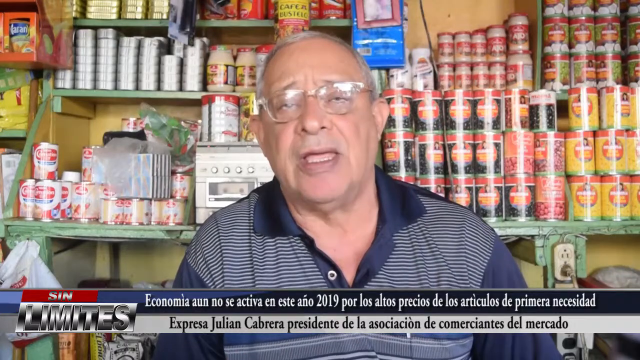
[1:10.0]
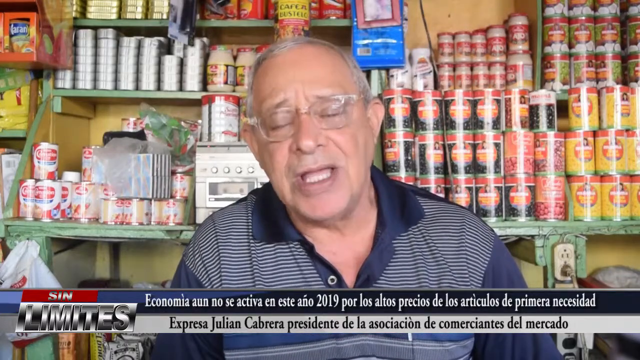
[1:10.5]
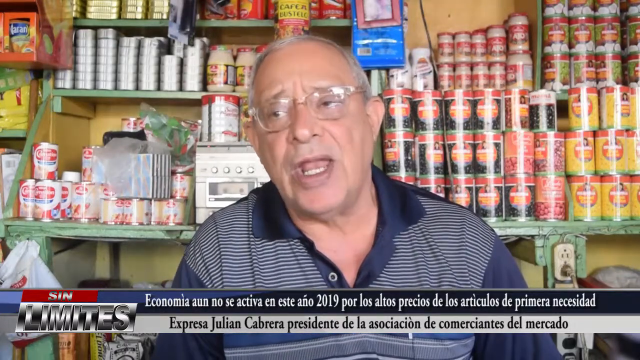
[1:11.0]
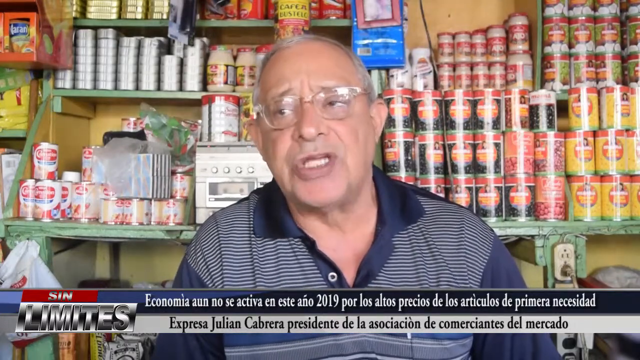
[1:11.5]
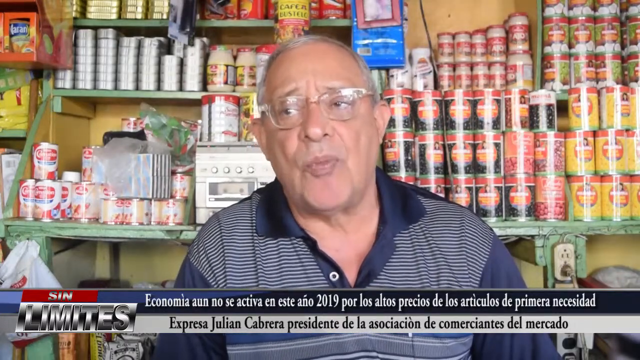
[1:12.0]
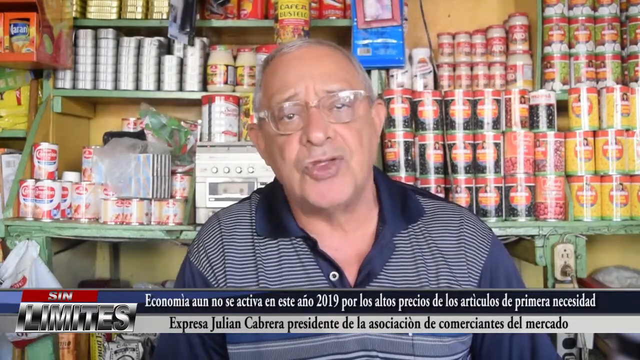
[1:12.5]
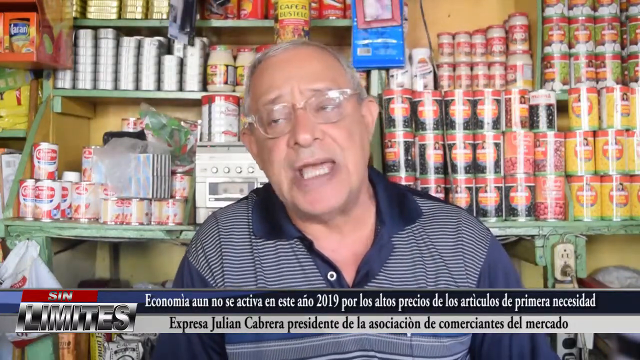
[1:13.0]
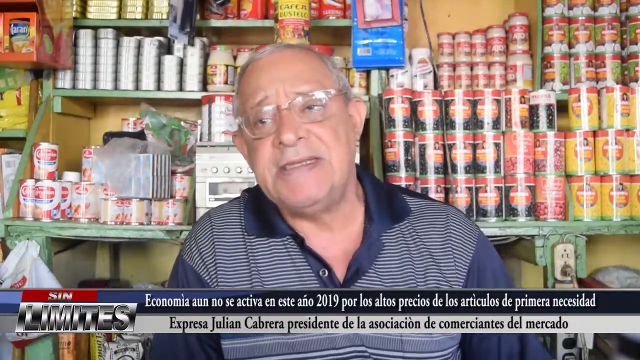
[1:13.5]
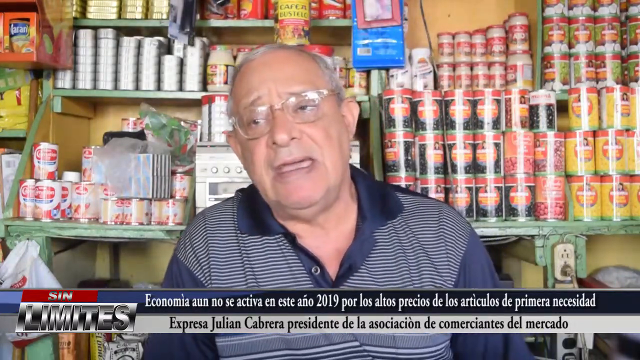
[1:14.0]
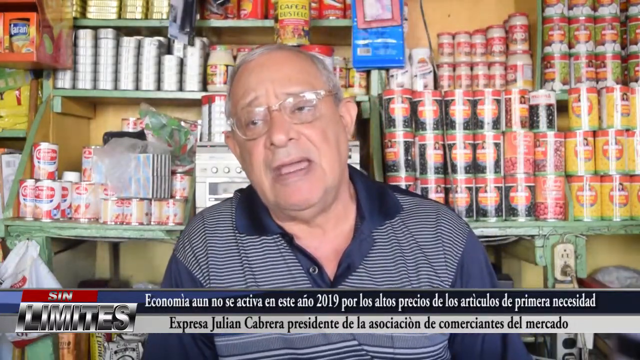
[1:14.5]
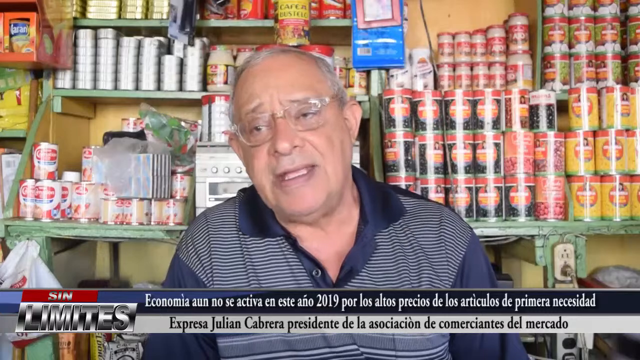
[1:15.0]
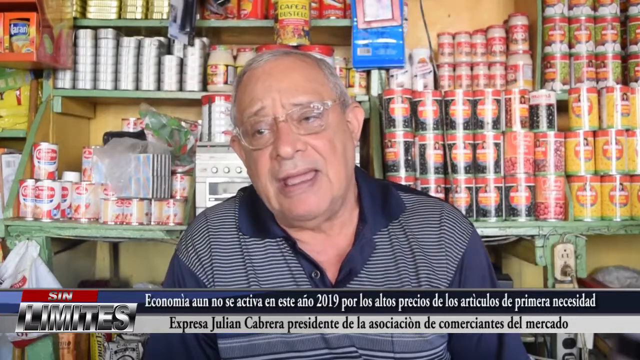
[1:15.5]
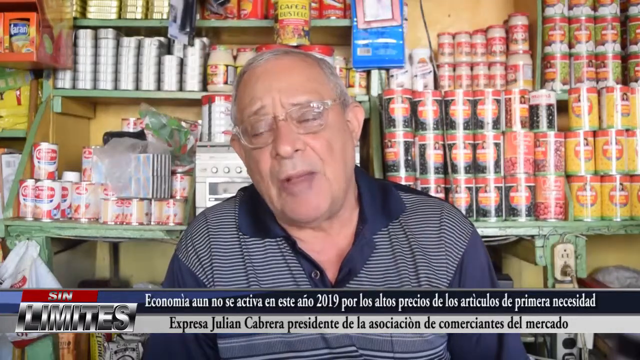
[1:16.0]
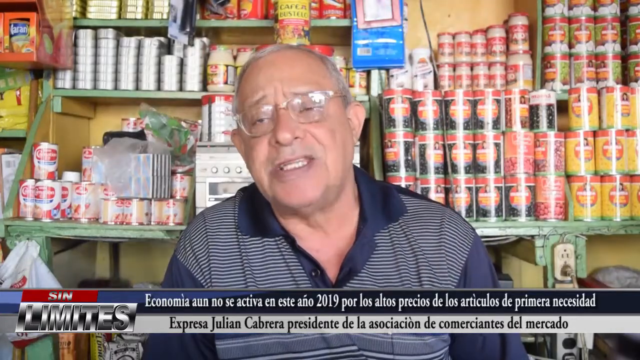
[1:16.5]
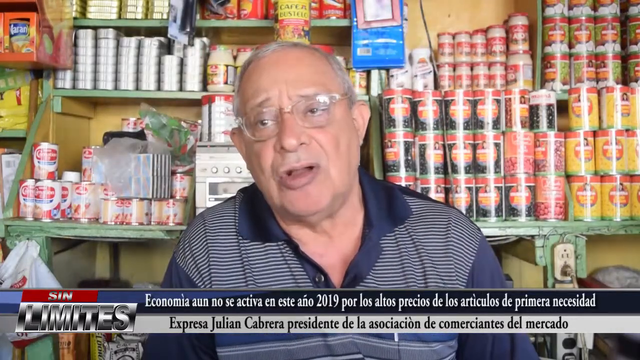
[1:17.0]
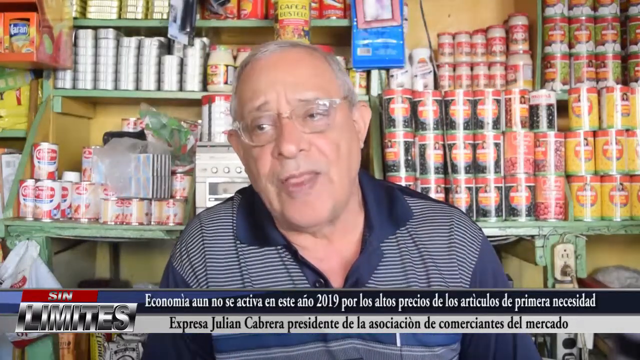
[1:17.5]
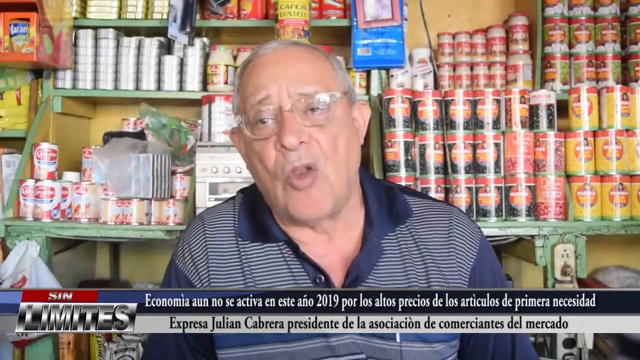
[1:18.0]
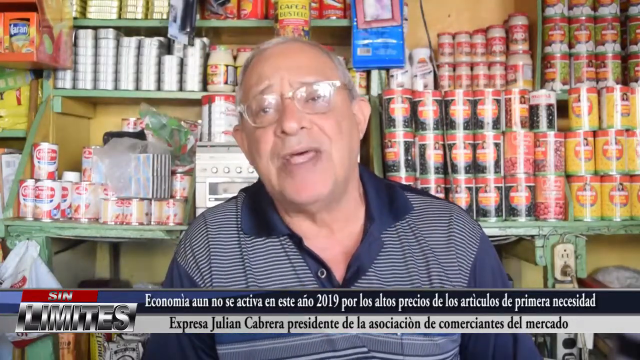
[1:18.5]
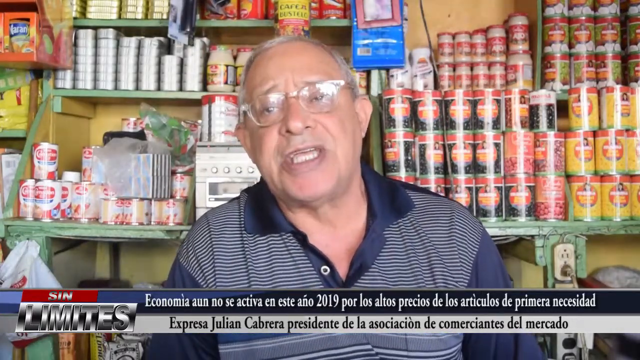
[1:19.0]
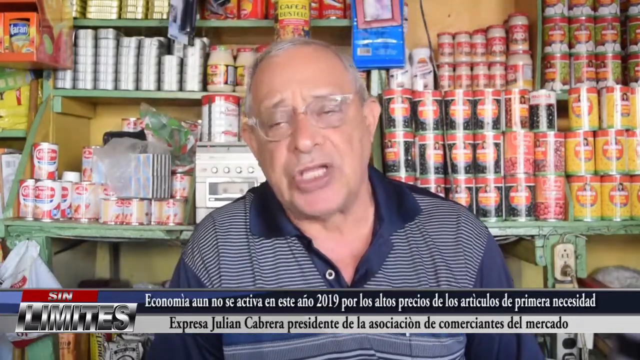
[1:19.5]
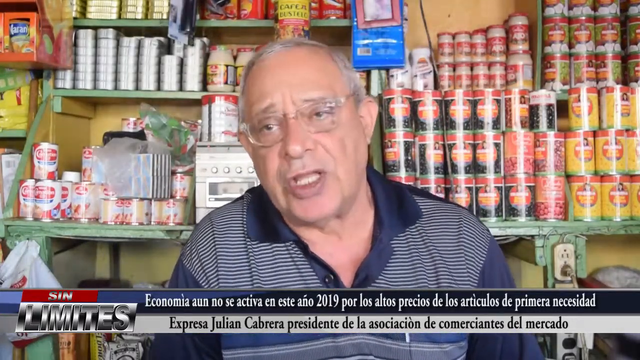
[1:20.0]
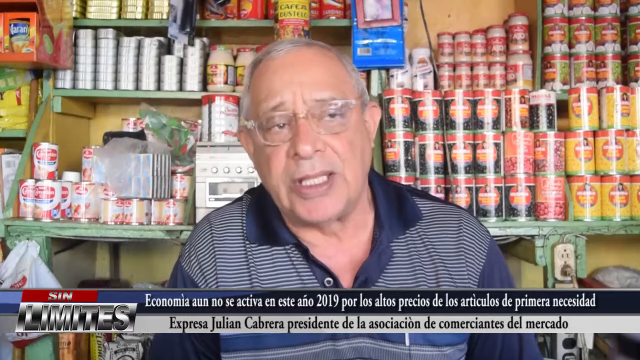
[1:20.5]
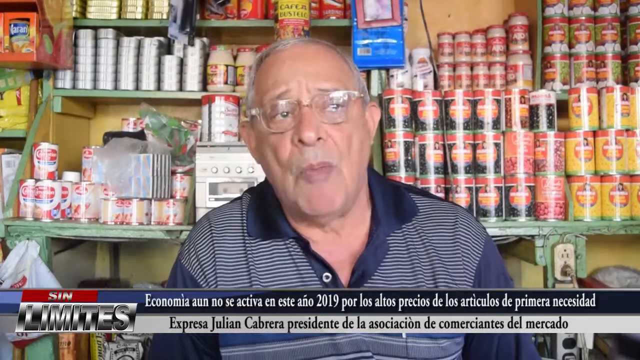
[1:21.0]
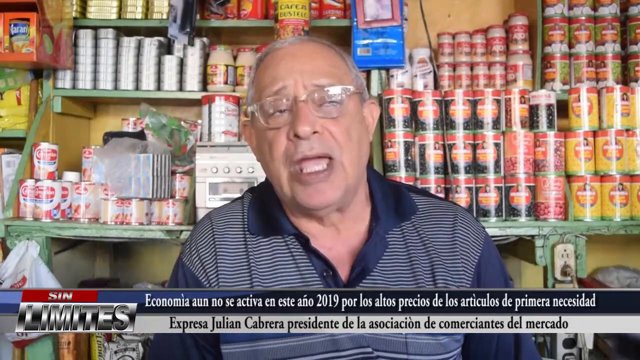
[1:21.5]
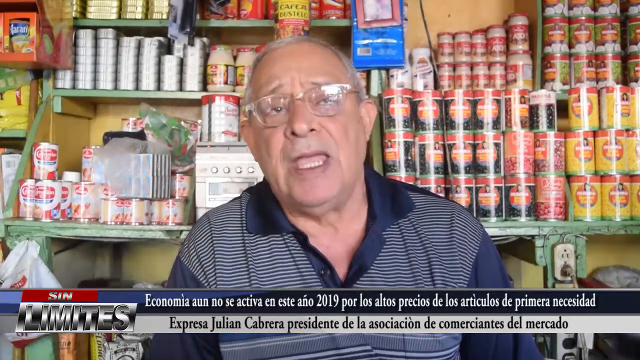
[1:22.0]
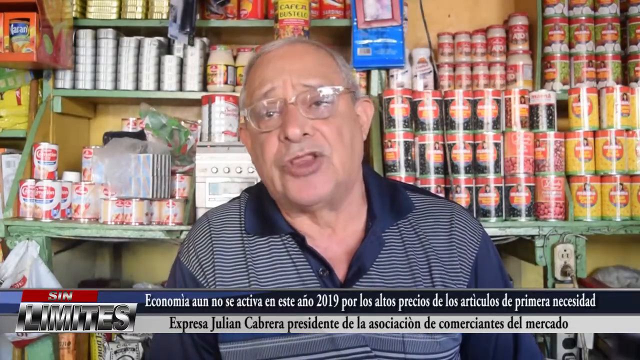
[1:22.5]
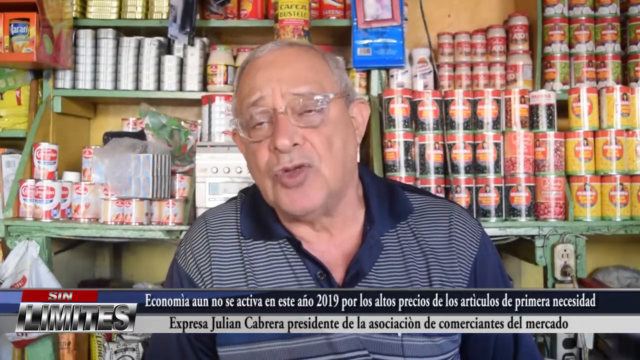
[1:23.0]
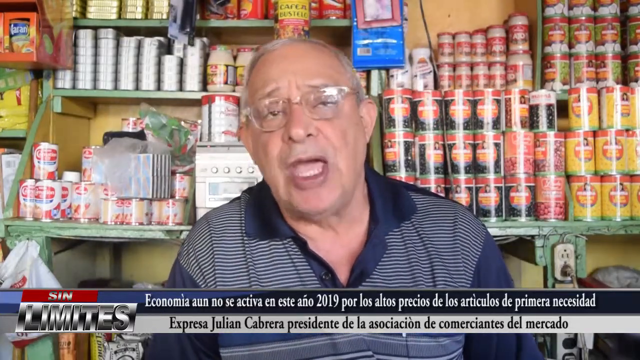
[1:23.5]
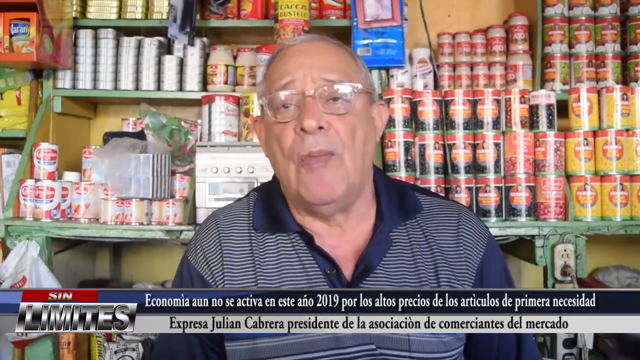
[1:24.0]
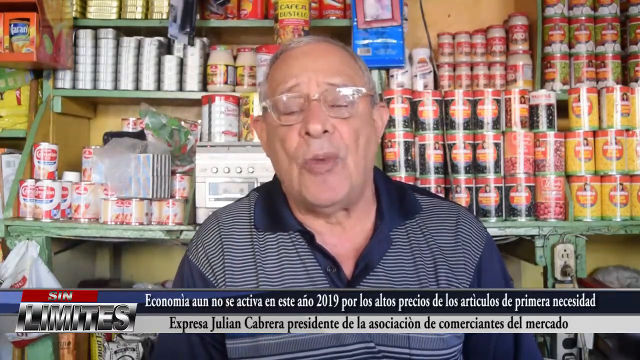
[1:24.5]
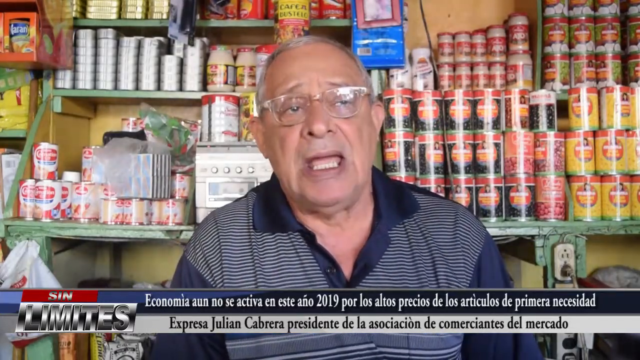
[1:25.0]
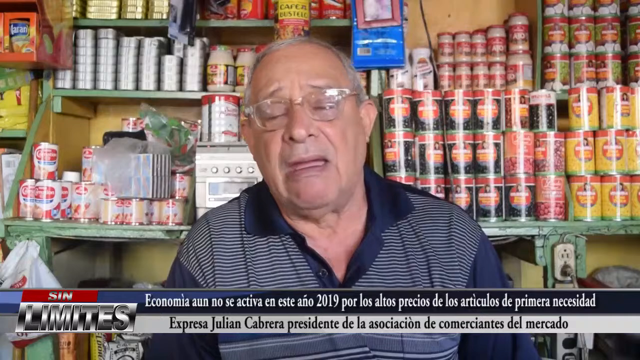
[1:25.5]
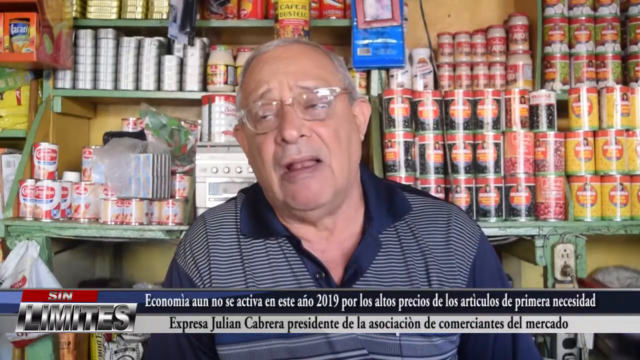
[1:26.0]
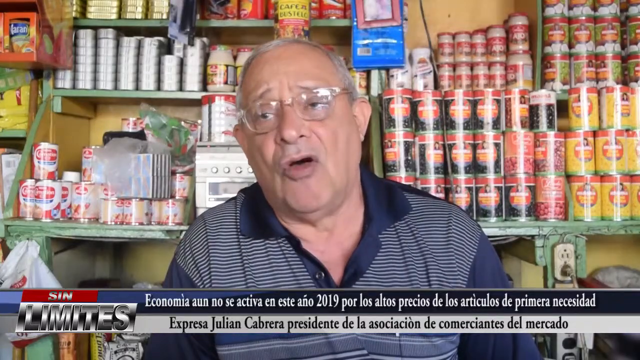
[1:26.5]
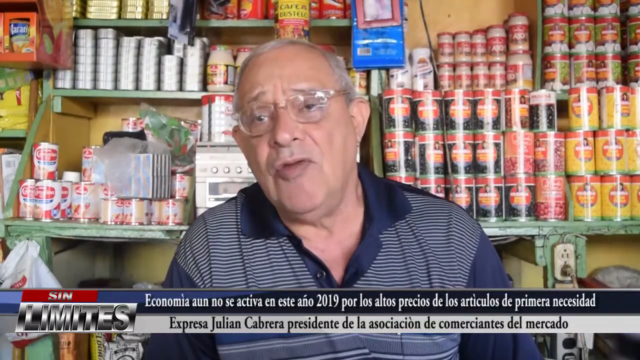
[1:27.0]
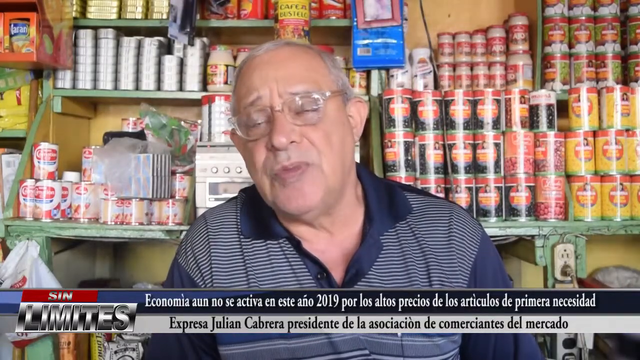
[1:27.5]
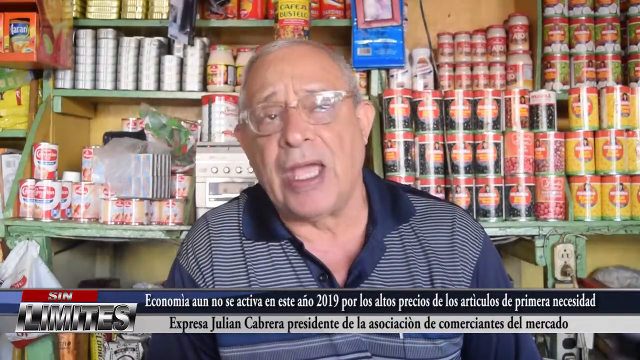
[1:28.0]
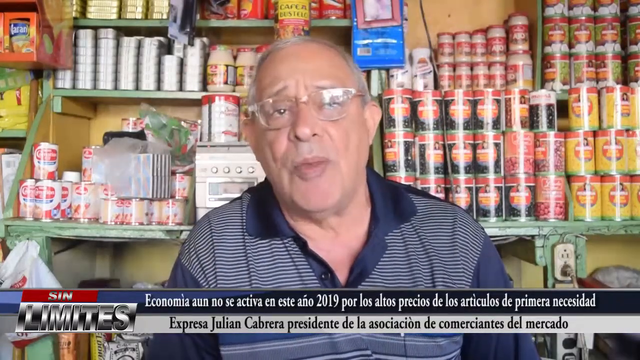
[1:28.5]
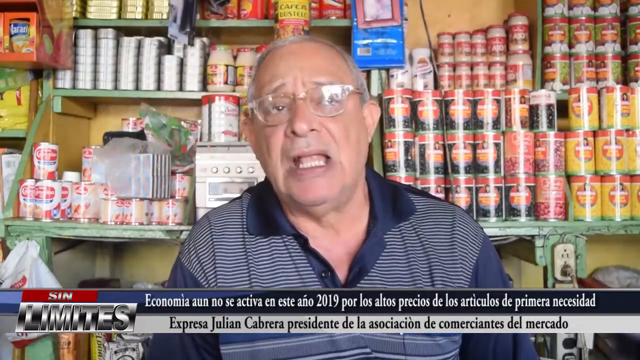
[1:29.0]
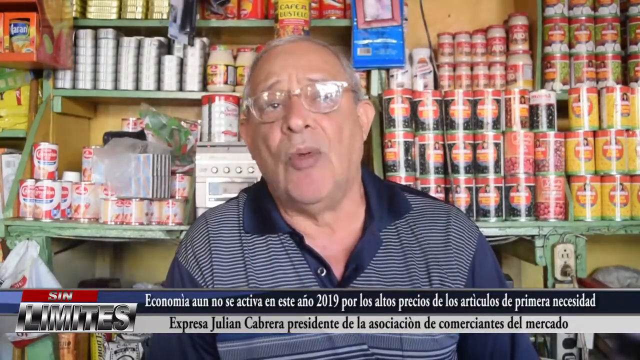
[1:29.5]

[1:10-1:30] A man, apparently in a grocery or supply store, sits in front of many canned goods with a cassette player behind his head. He talks throughout the shot, with a neutral expression, neither smiling nor frowning much. The radio behind him has gray knobs. To the man's right is an outlet with two sockets at the top; the first has nothing plugged in, while the second has a cord that looks almost gray. He wears glasses, and as he talks and moves his head, a slight glare reflects off them.